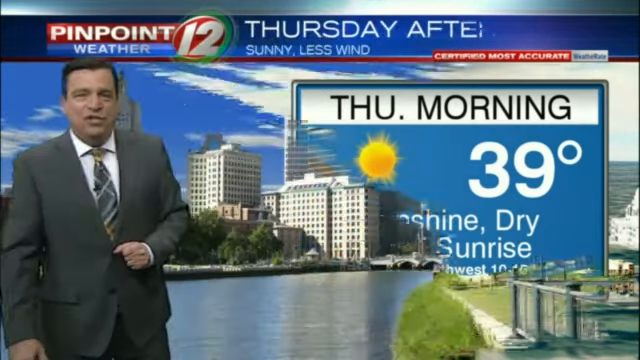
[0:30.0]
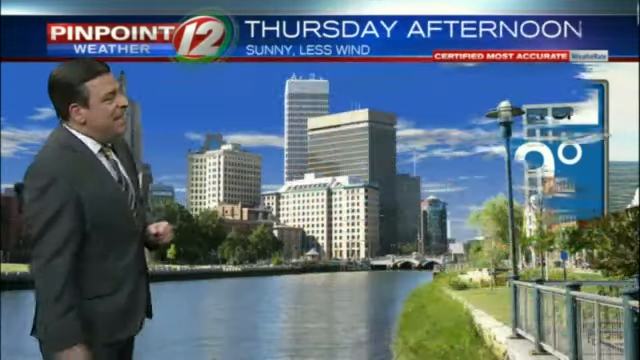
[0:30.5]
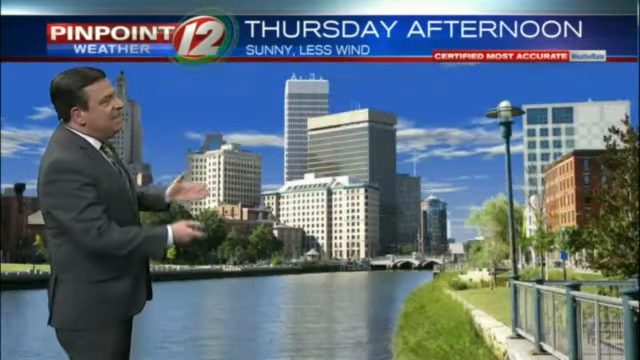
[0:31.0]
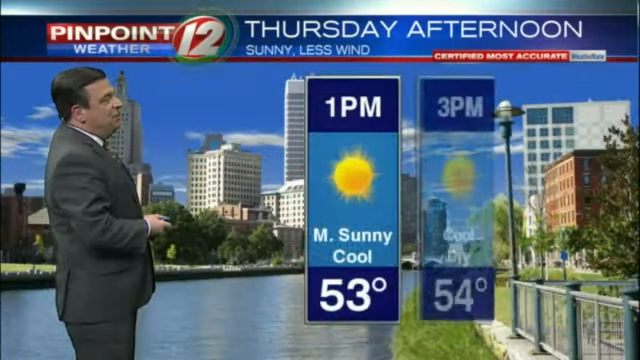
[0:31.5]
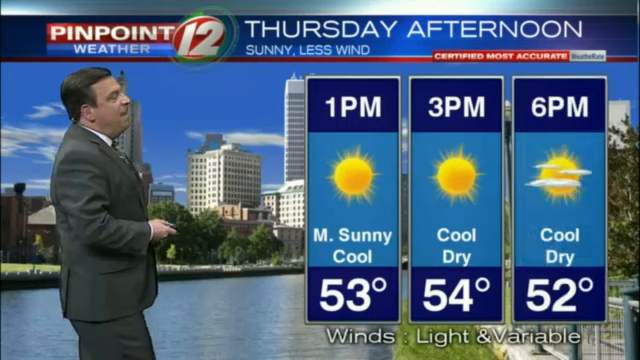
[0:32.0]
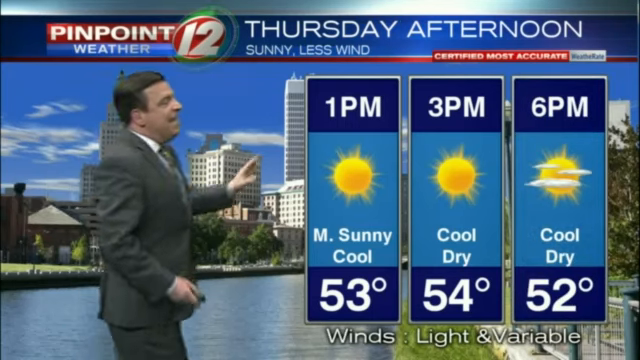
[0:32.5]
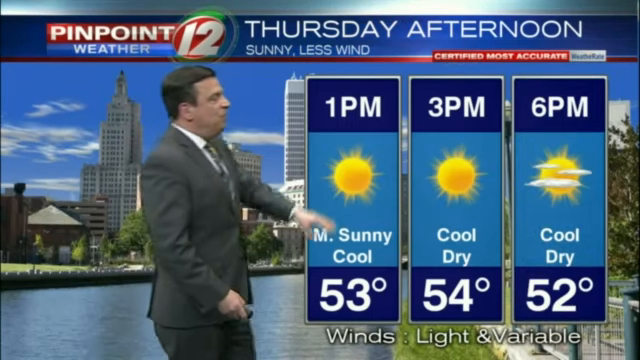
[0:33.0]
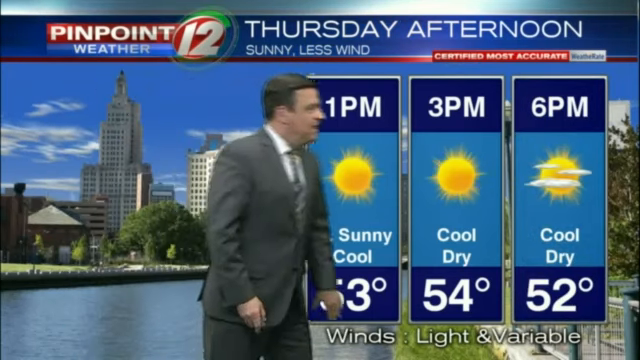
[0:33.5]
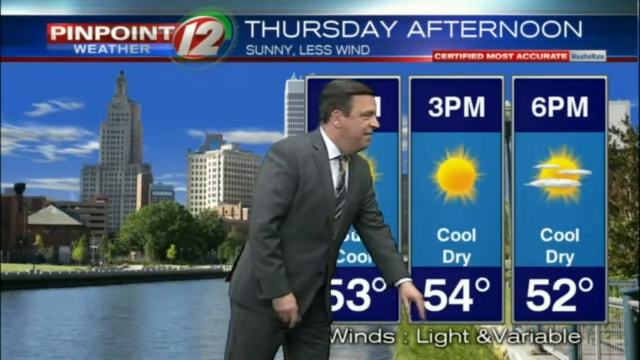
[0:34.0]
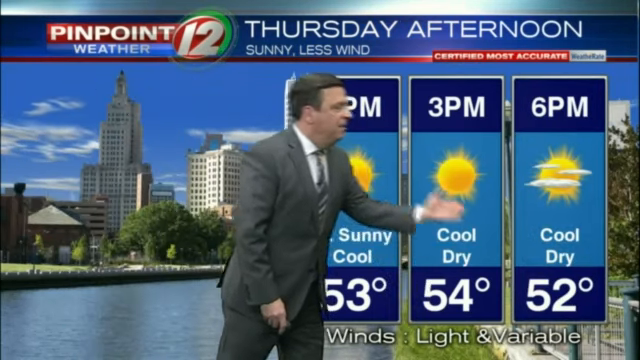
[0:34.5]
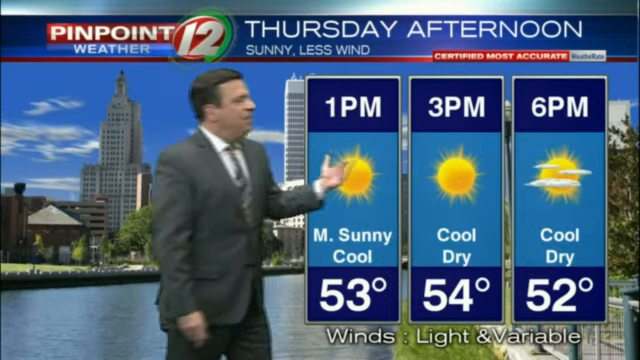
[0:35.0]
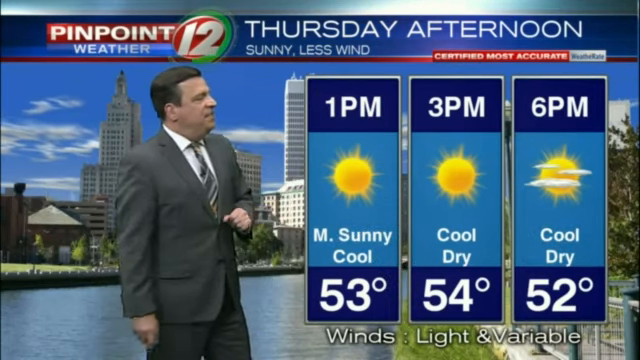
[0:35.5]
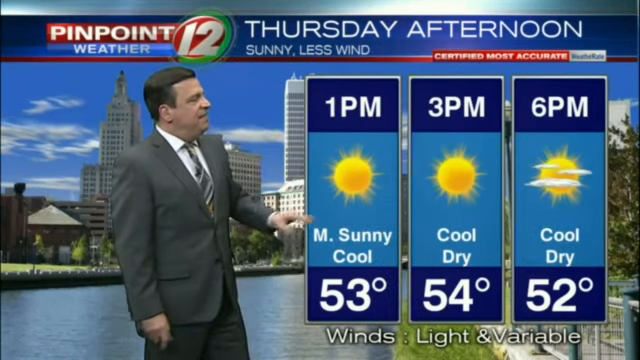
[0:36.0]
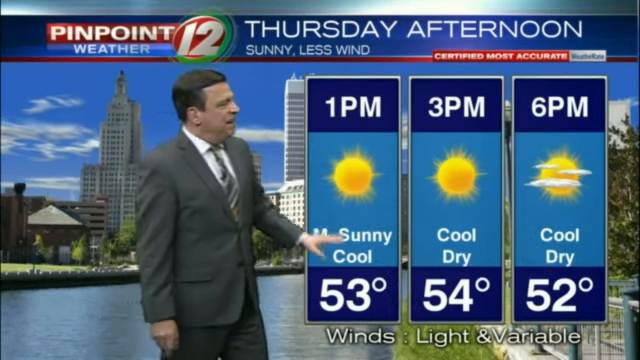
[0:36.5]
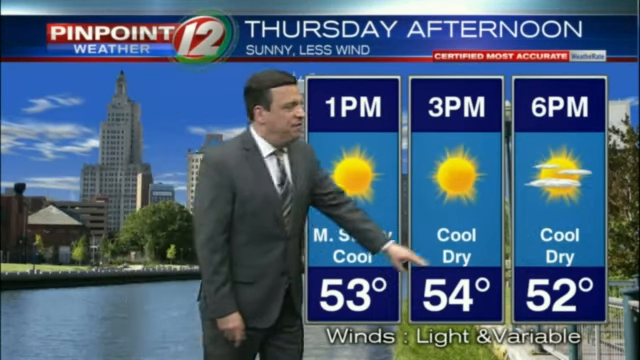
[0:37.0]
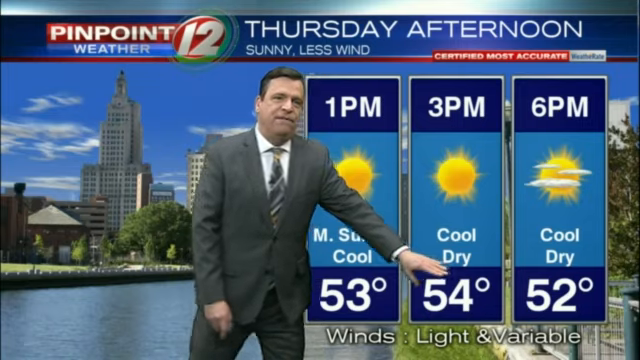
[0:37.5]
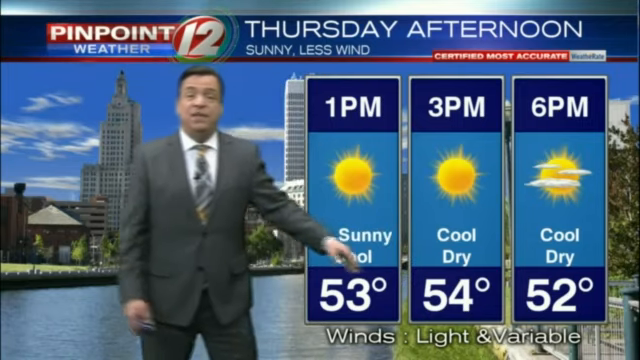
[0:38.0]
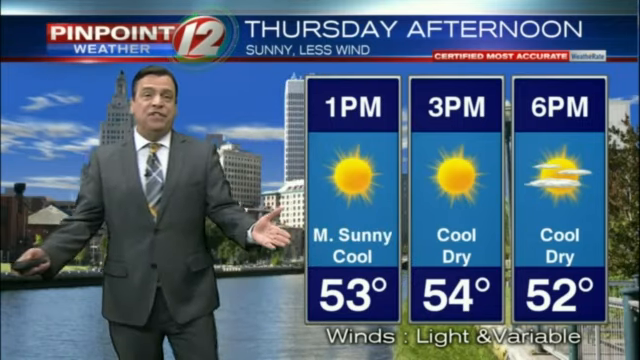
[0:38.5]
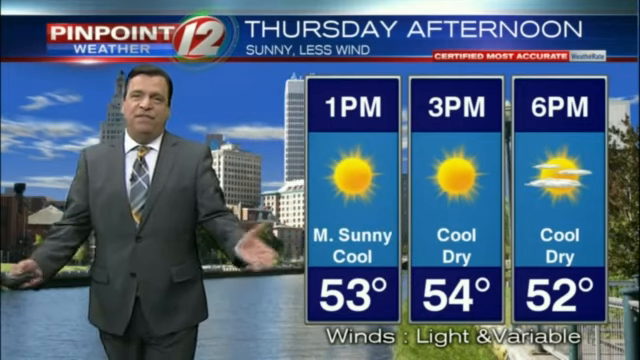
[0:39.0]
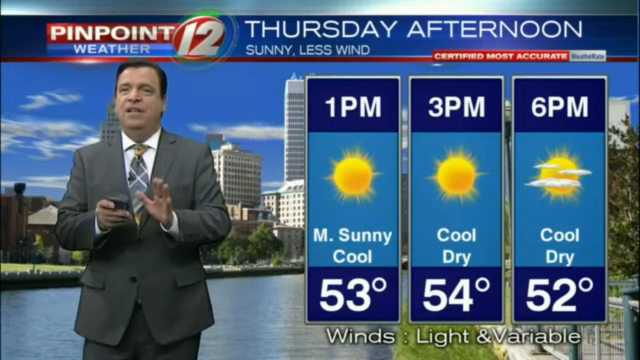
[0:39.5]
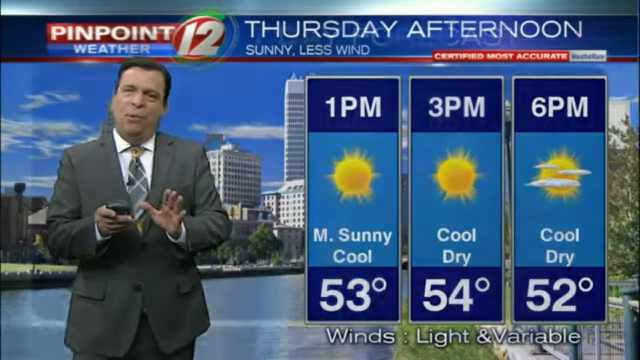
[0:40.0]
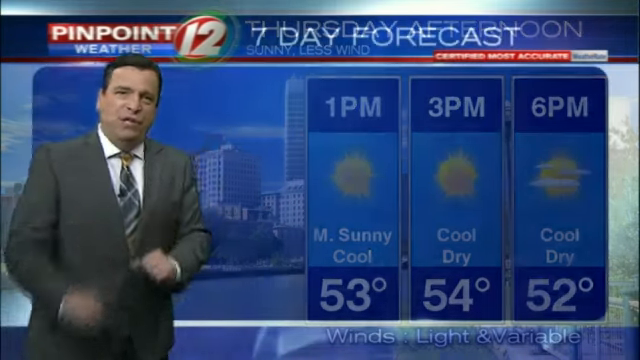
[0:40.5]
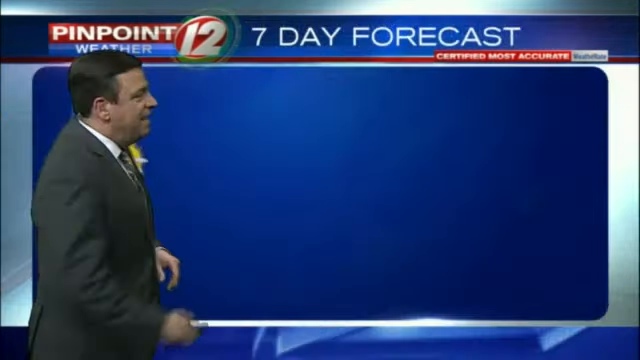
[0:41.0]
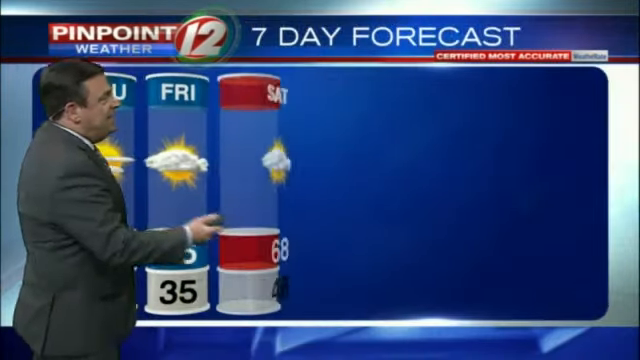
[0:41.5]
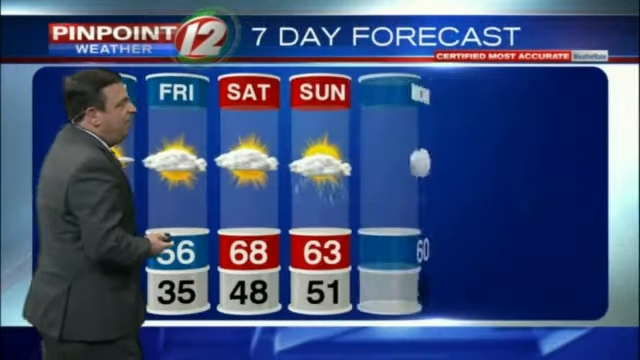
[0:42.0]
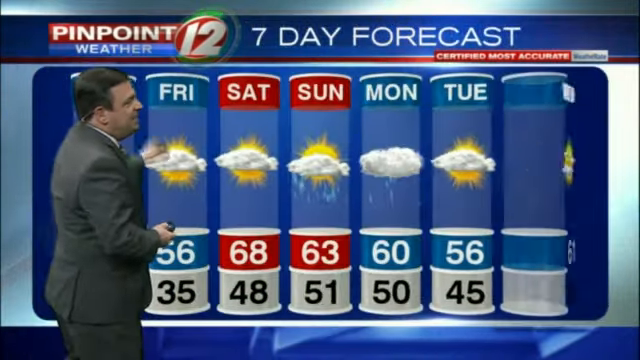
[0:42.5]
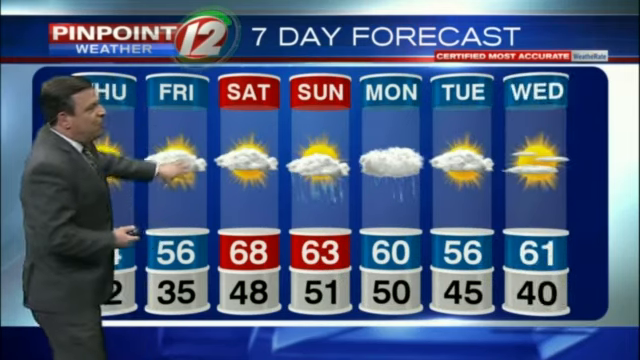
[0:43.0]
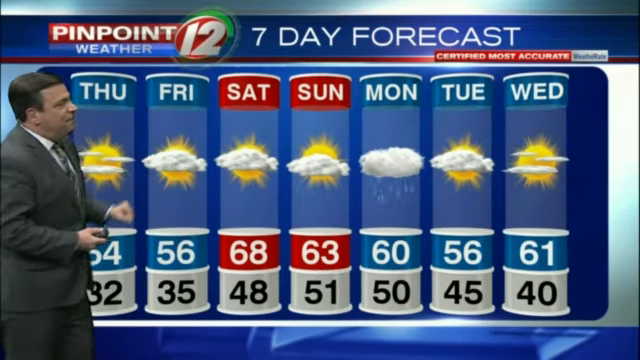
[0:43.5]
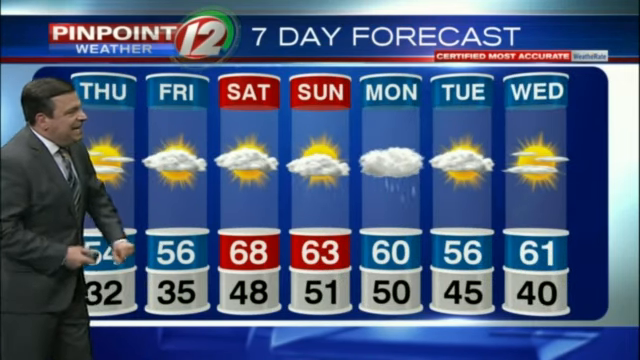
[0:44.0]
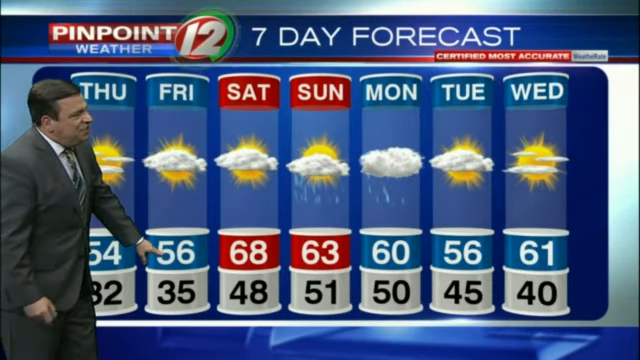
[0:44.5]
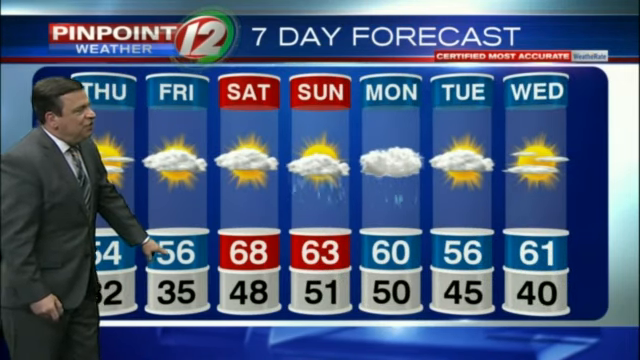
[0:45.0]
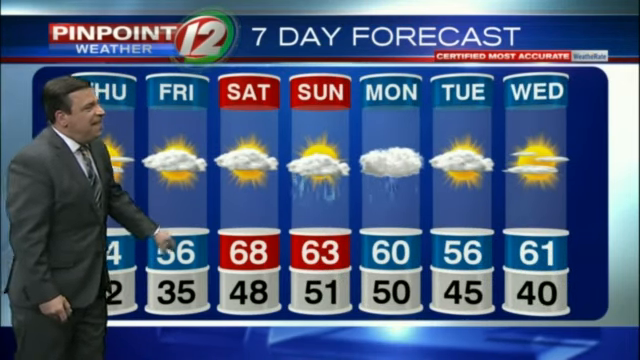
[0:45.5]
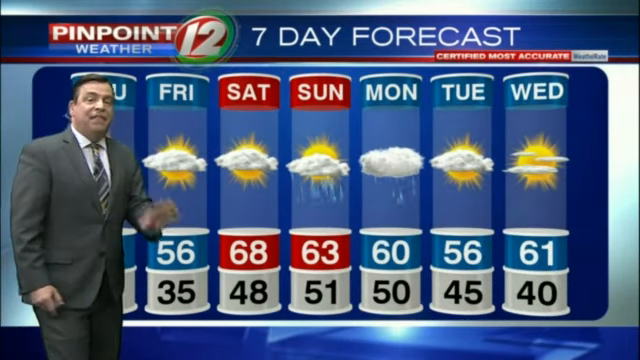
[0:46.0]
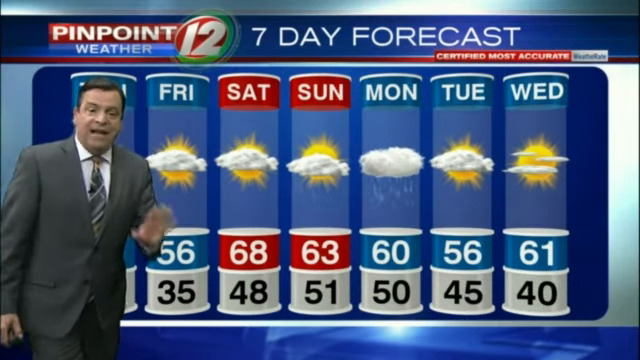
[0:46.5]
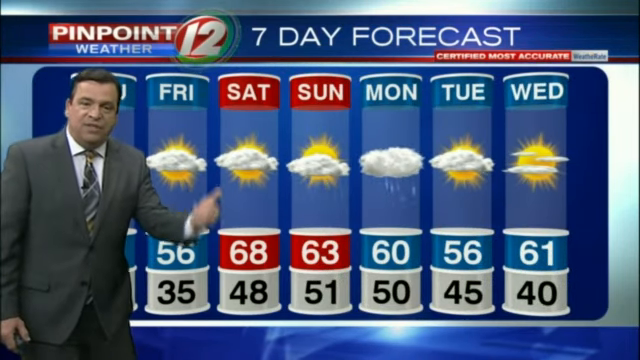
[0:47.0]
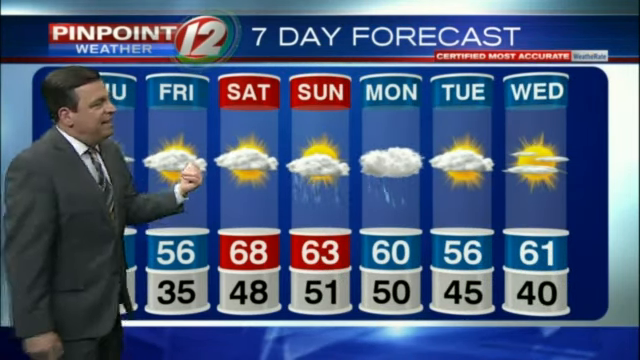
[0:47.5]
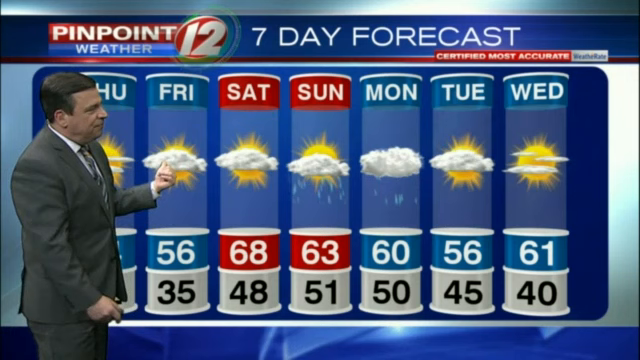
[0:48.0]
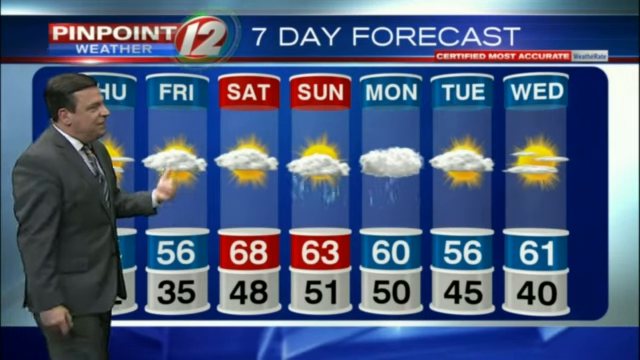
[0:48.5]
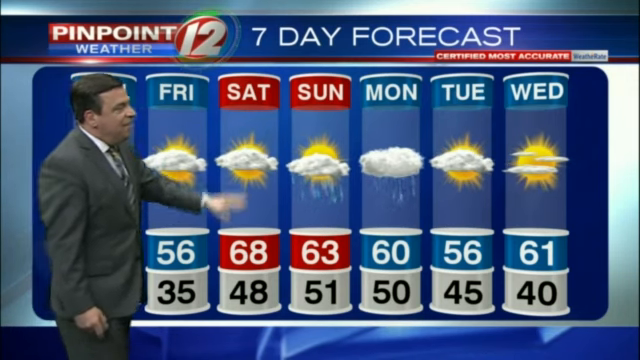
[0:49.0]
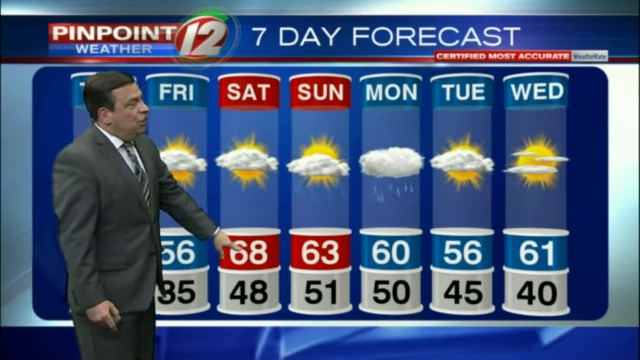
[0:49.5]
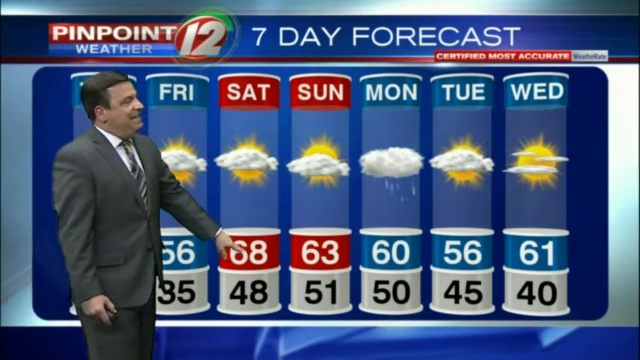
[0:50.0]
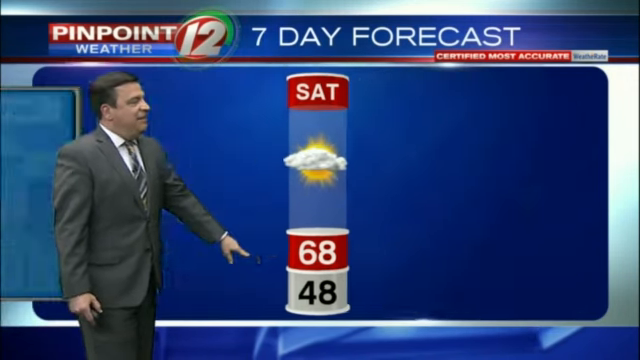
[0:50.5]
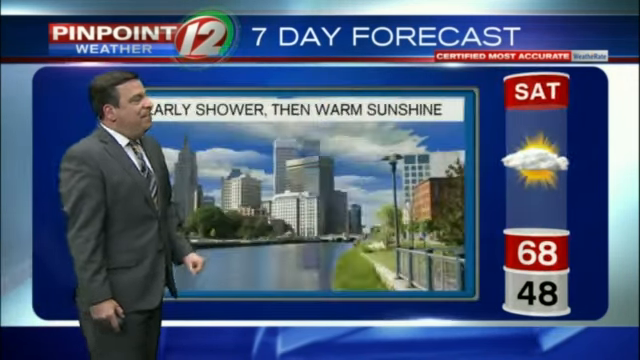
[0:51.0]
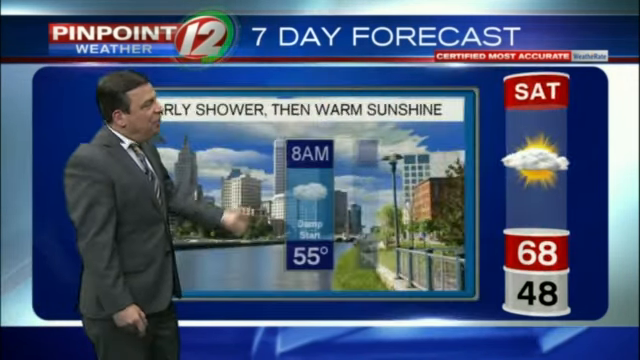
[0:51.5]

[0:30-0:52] The weather segment continues, and the view changes to a city with water in the middle, along with the forecast throughout the day. At 1 p.m. it will be 53, sunny and cool; at 3 p.m. it will be 54, dry and cool; at 6 p.m. it will be 52, dry and cool, with some clouds. He points toward it, faces the camera and gestures, holding something black in his left hand. A blue screen shows the extended forecast for the week. It will be cool throughout the week, with clouds on Friday, Saturday, Sunday, Monday and Tuesday. The temperature rises, and he shows this. Rain is shown midweek as well, with rain on Saturday and Sunday; Friday is a little more cloudy, and Monday shows rain. The winds are light and variable throughout the week.